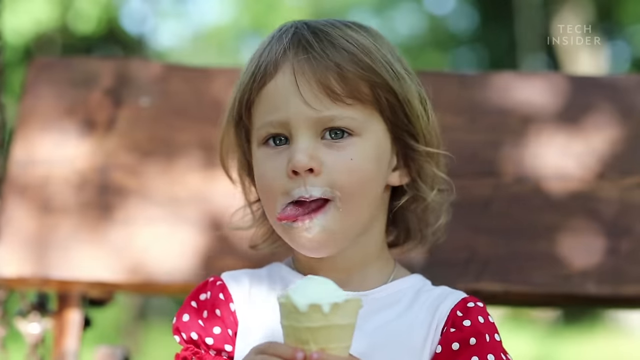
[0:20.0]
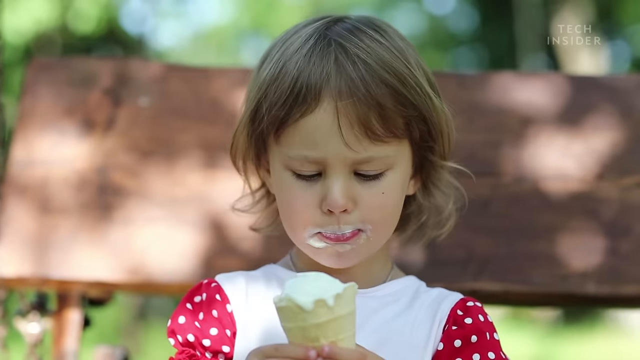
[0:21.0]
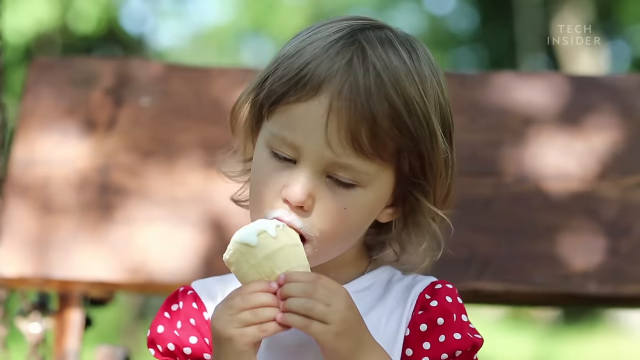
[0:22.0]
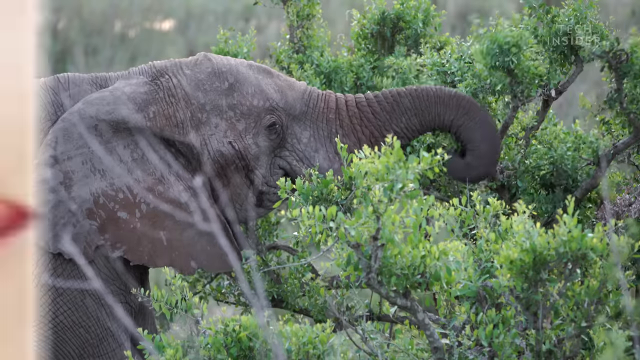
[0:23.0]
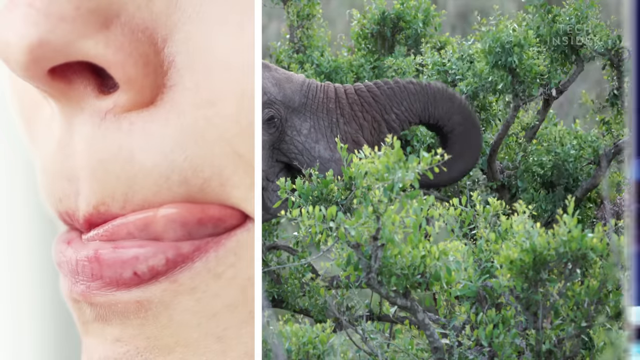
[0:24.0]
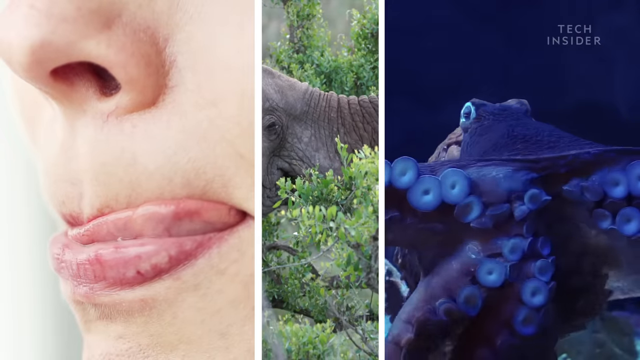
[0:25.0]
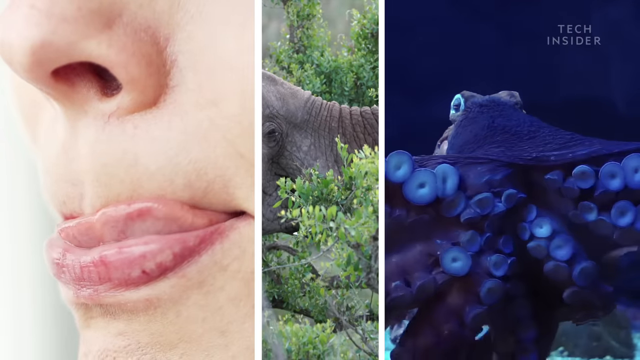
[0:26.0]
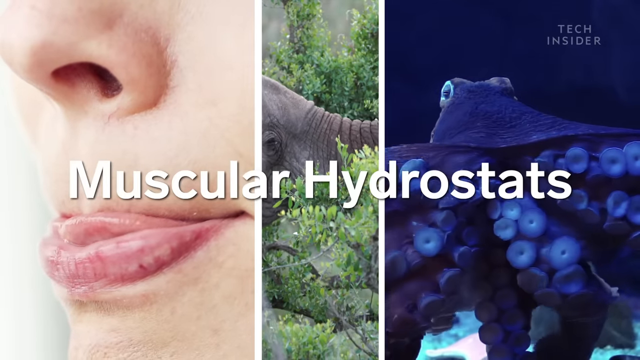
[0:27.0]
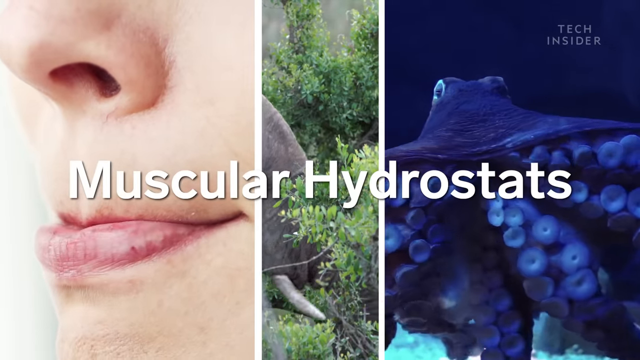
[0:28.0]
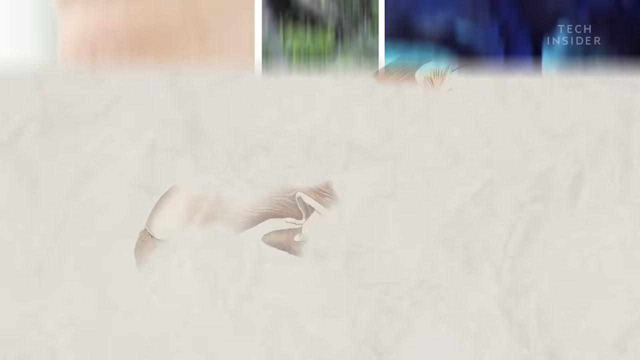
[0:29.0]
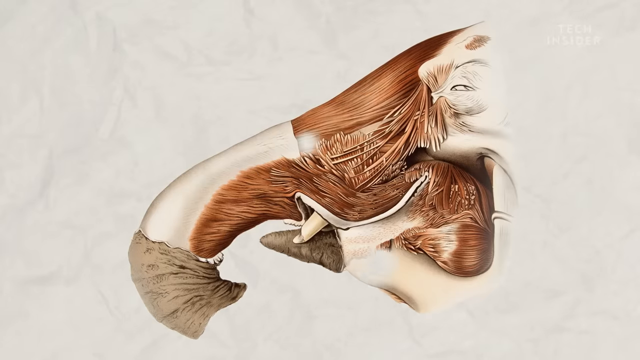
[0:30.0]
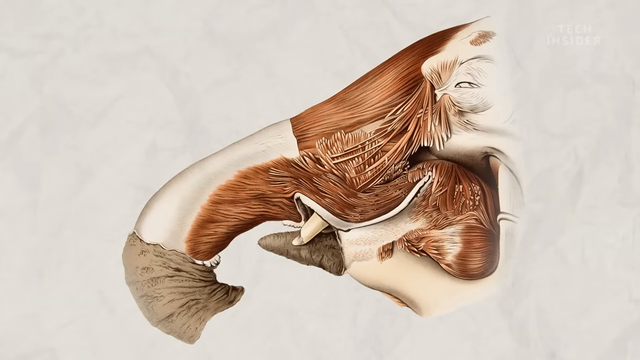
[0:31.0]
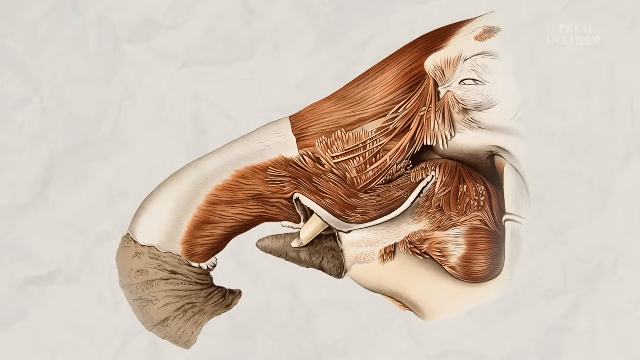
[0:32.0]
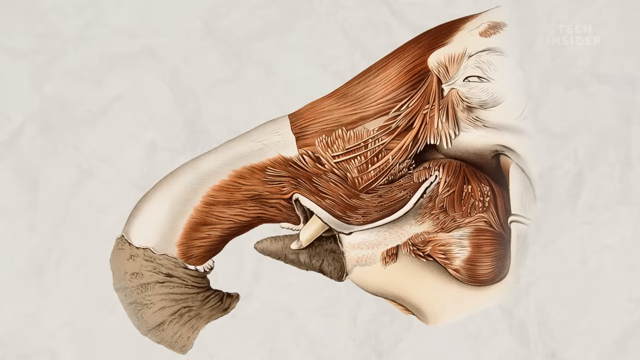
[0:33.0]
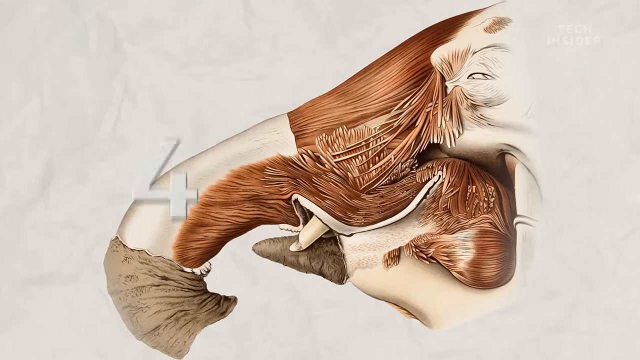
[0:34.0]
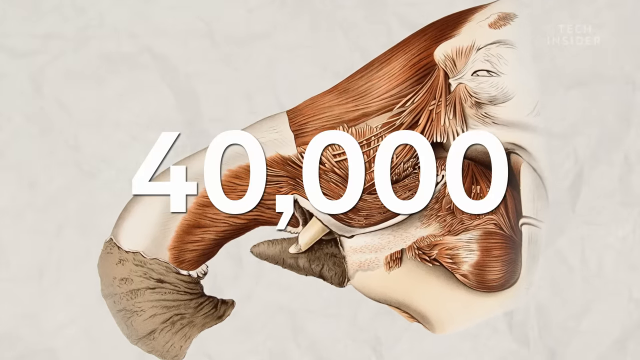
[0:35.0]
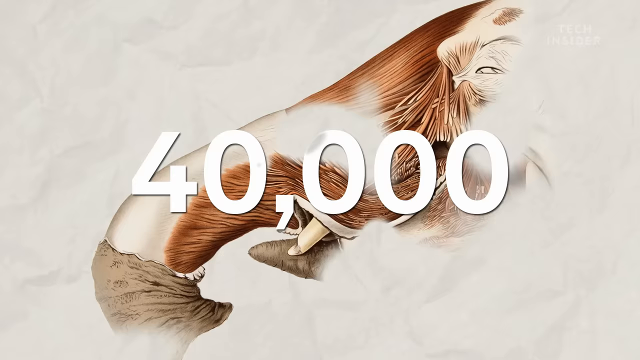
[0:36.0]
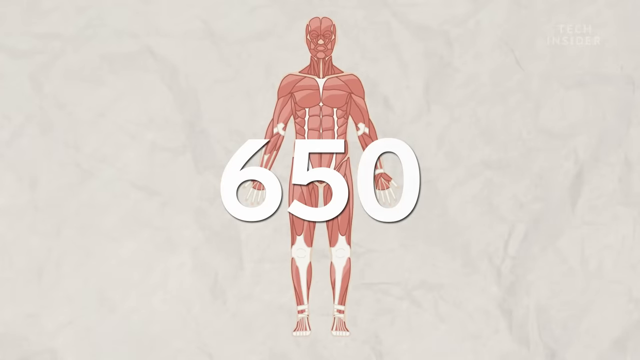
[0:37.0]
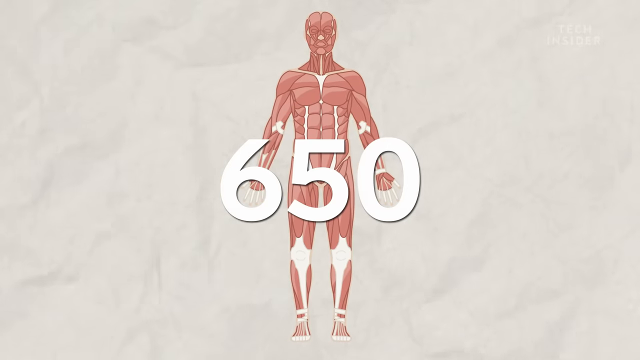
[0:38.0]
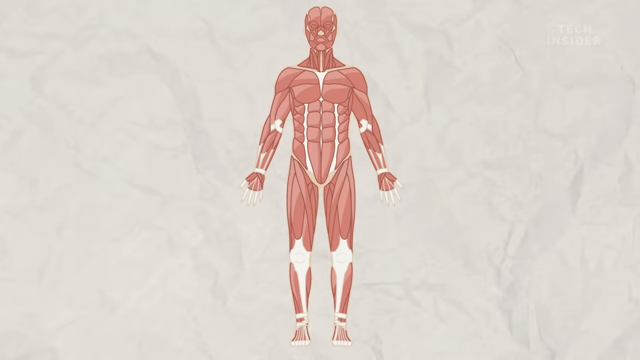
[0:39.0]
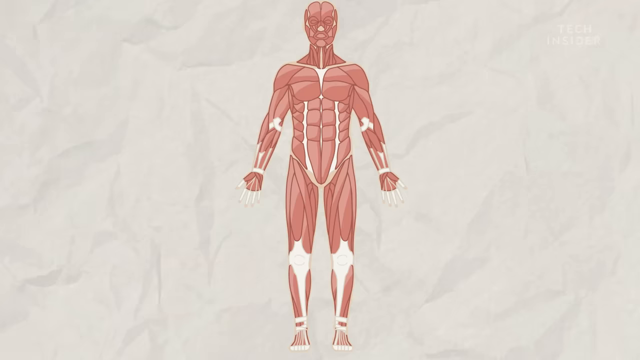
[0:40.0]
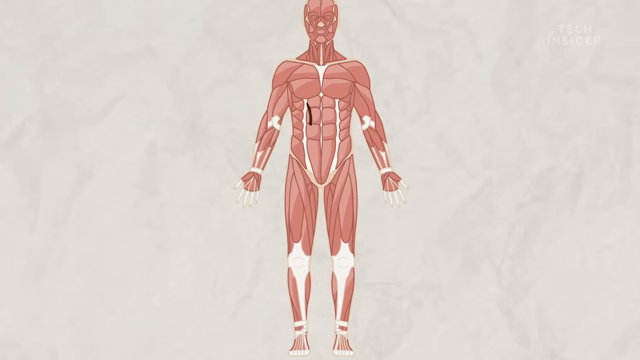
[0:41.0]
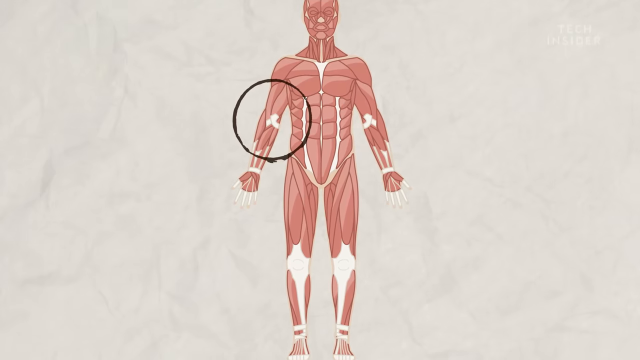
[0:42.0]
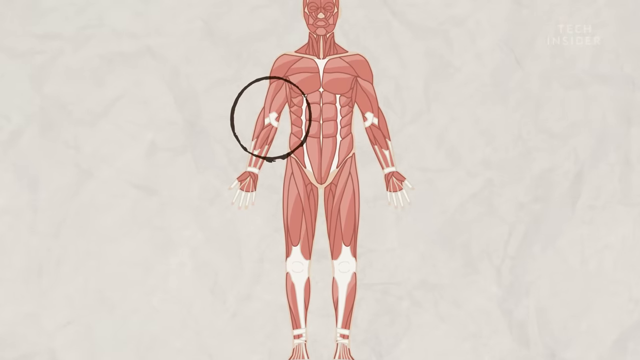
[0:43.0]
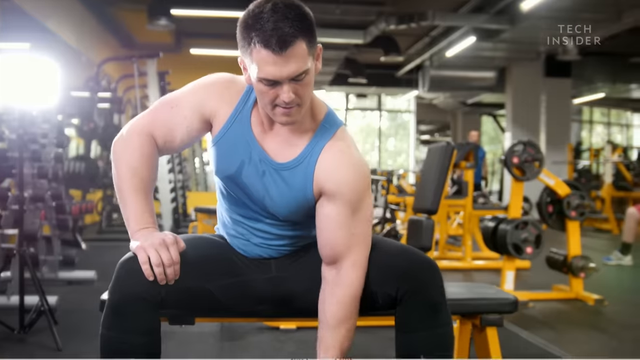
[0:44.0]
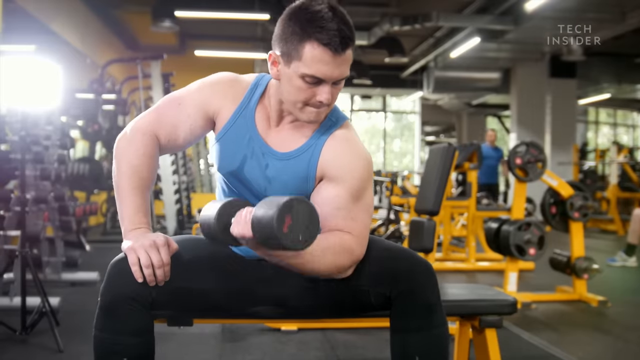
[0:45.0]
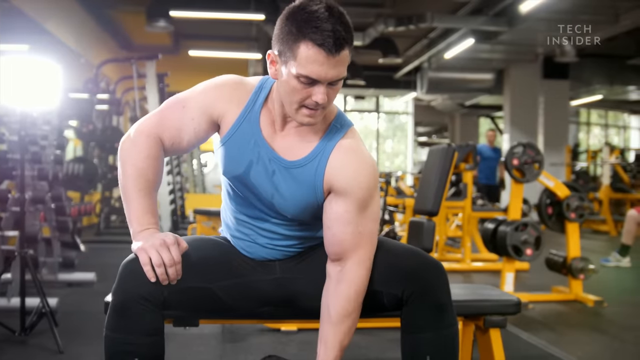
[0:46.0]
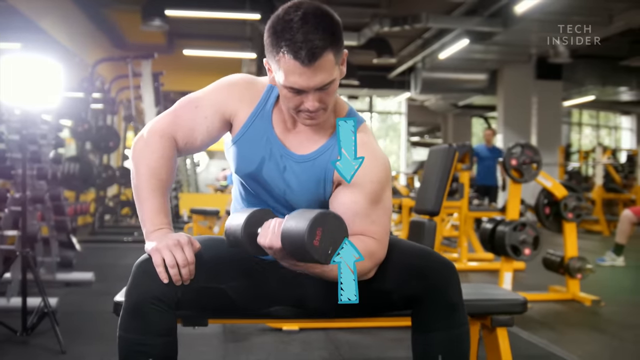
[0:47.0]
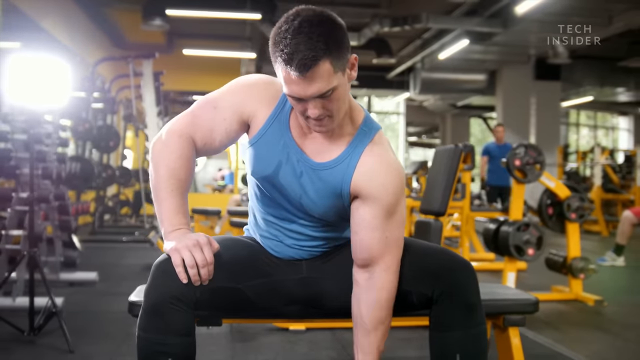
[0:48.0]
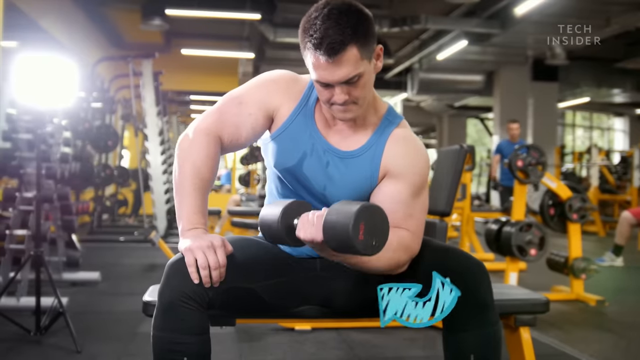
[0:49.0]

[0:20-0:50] She wears a red dress with five dots. Three images appear: on the left, birds licking their lips; in the middle, an elephant eating out of a tree; and on the right, an octopus. Muscular hydrostats are shown, followed by an image of a section of the muscles in the elephant. Back at the trunk area, "40 000" is written, and "650" appears on a human body, apparently comparing a measure that is 650 for humans and 40 000 for elephants. A circle appears on a person's biceps, then a person works out in a gym while arrows show how the motion takes place. The ice cream the girl has is white, possibly vanilla.